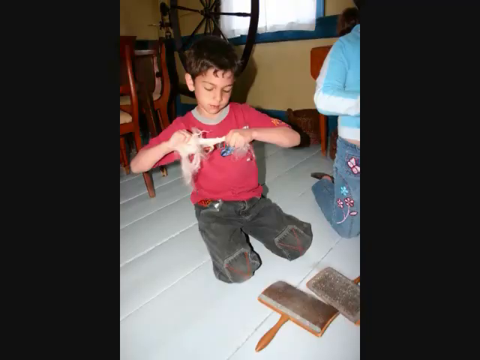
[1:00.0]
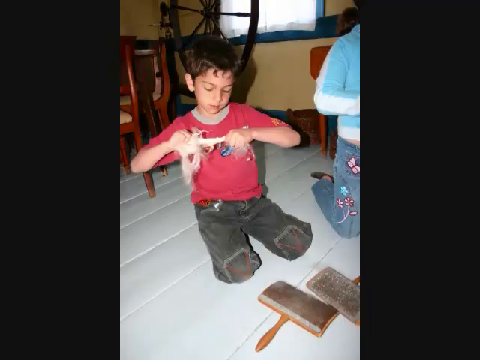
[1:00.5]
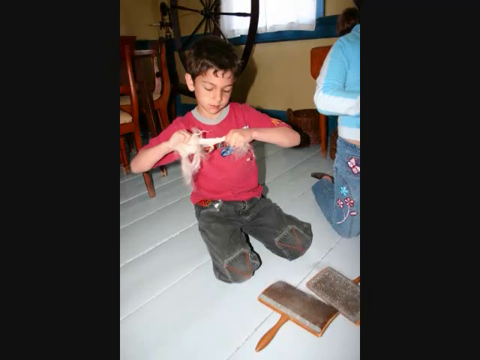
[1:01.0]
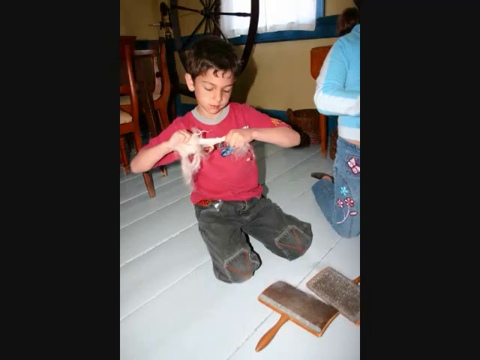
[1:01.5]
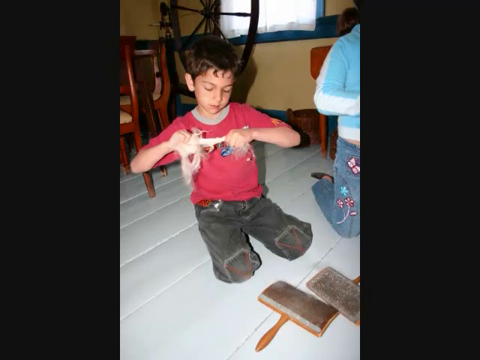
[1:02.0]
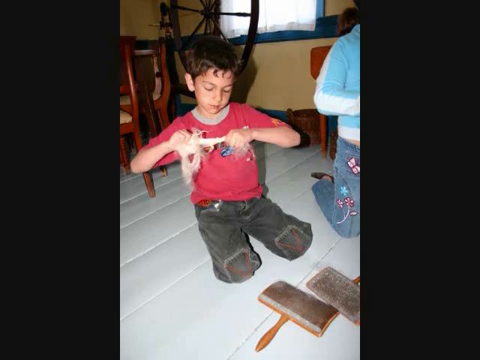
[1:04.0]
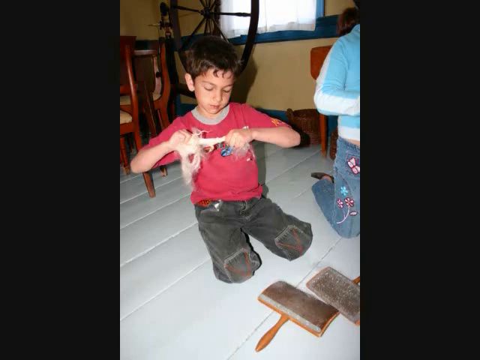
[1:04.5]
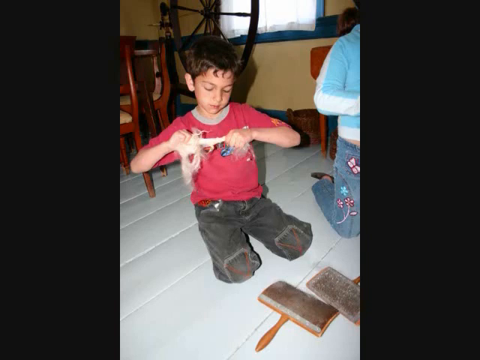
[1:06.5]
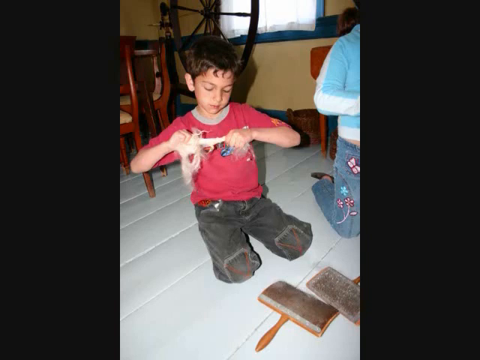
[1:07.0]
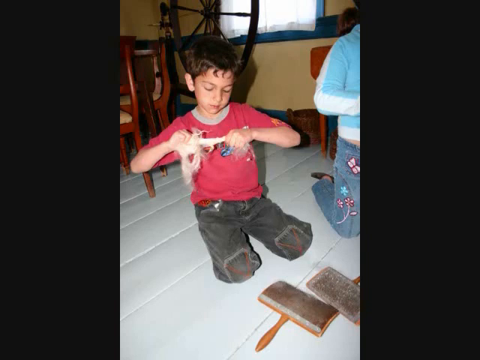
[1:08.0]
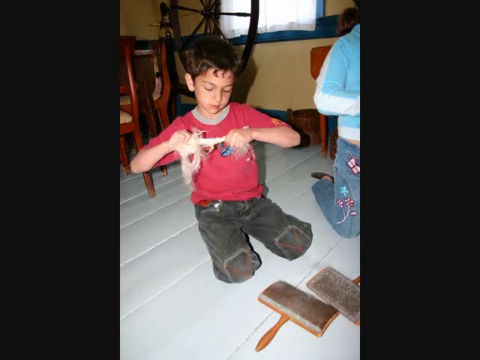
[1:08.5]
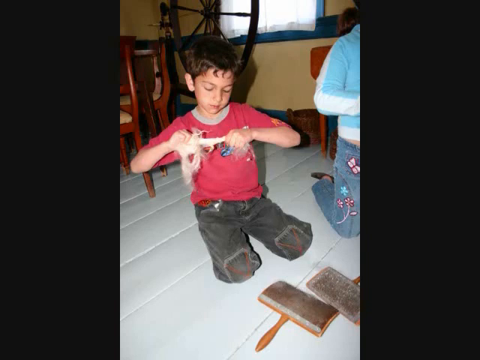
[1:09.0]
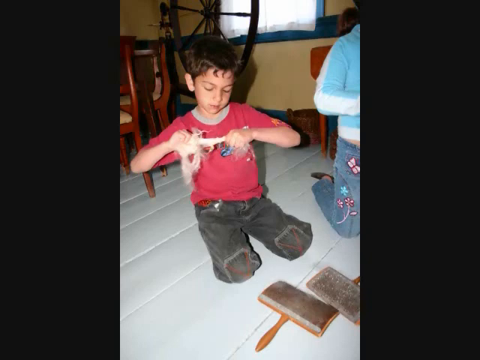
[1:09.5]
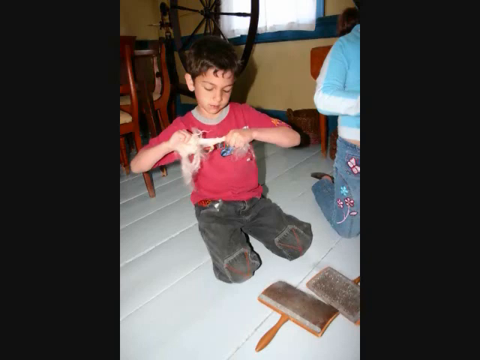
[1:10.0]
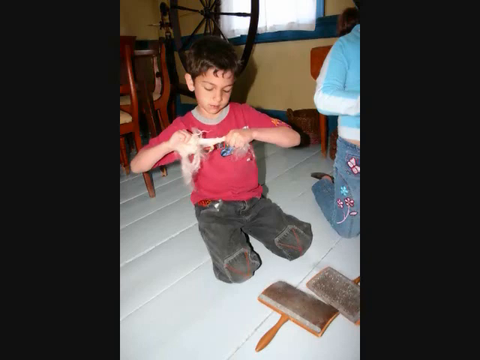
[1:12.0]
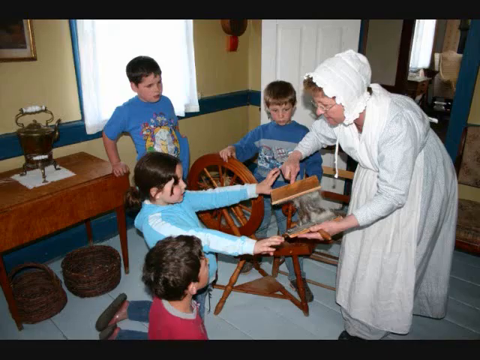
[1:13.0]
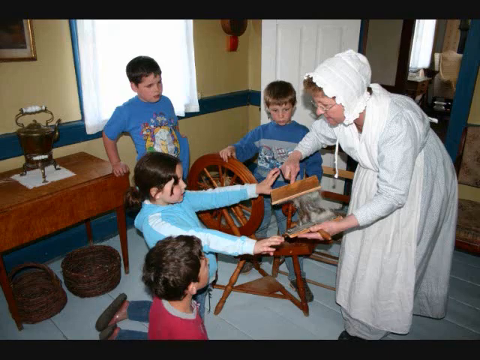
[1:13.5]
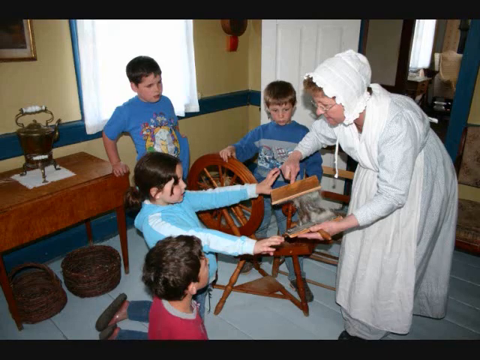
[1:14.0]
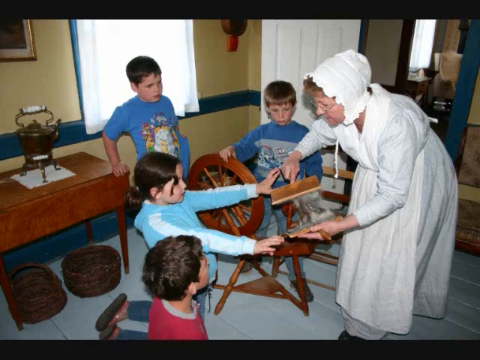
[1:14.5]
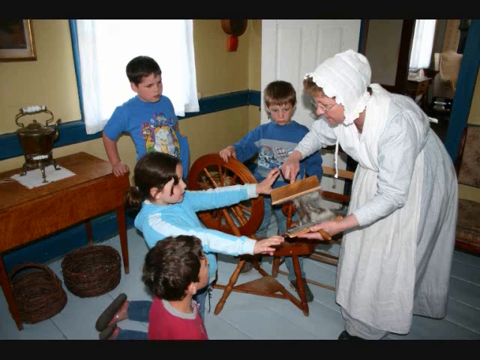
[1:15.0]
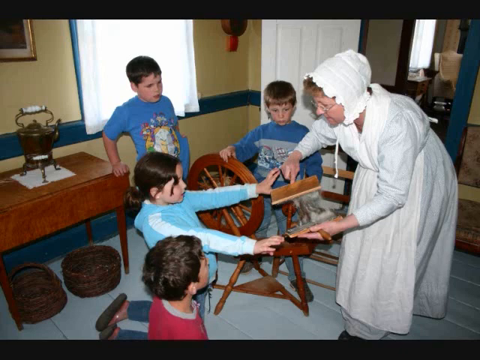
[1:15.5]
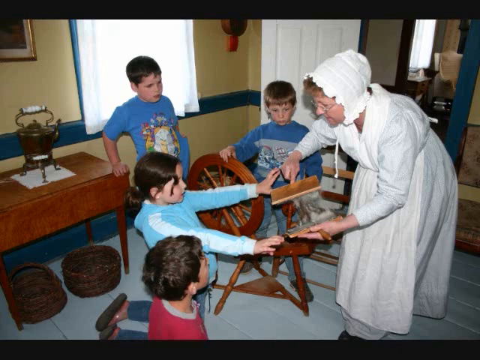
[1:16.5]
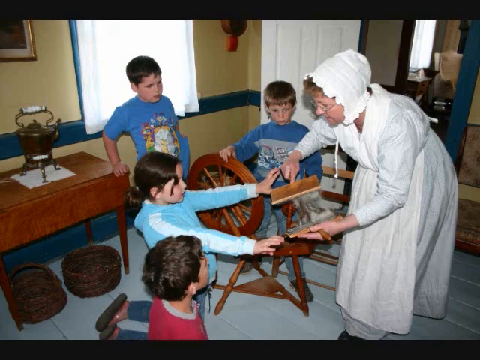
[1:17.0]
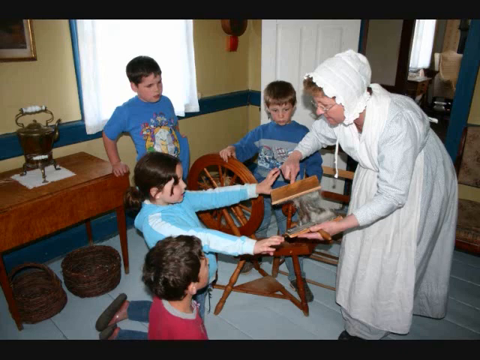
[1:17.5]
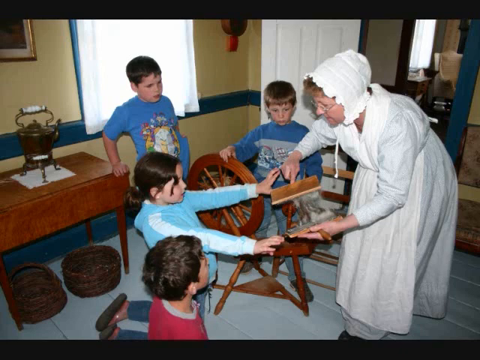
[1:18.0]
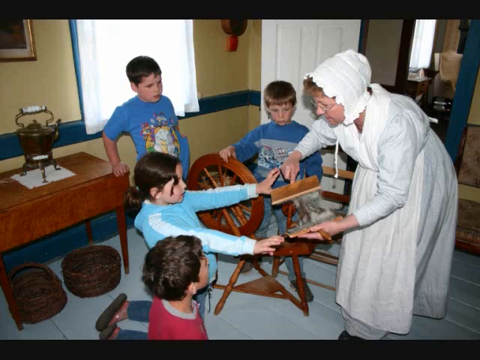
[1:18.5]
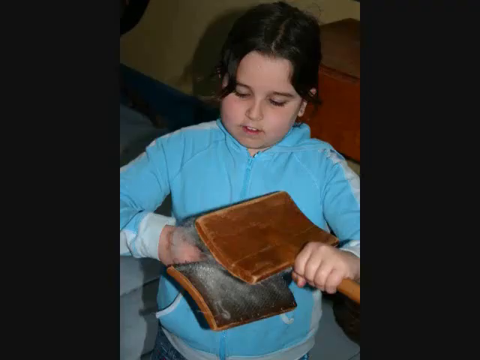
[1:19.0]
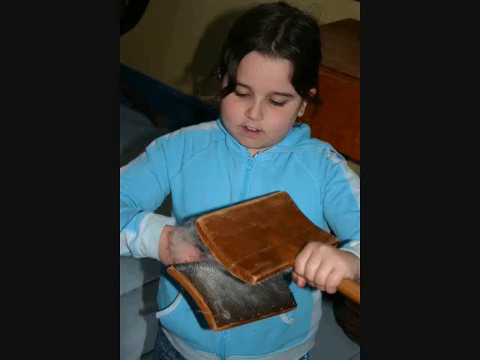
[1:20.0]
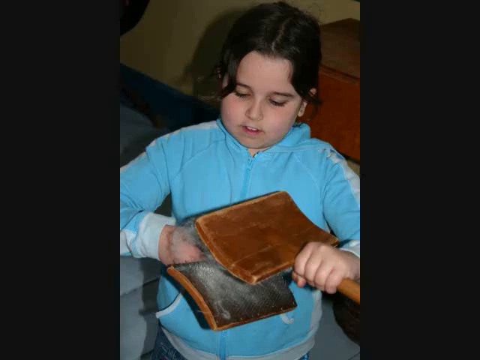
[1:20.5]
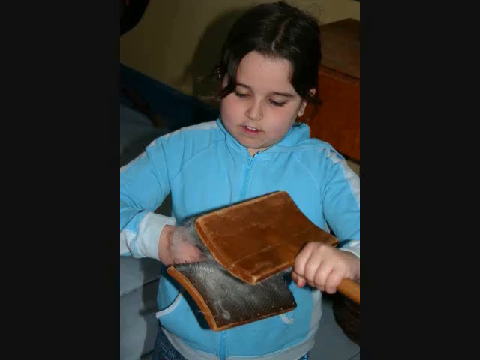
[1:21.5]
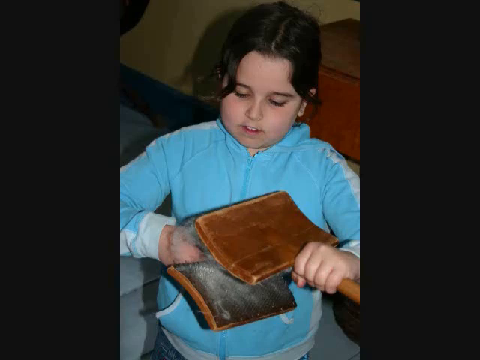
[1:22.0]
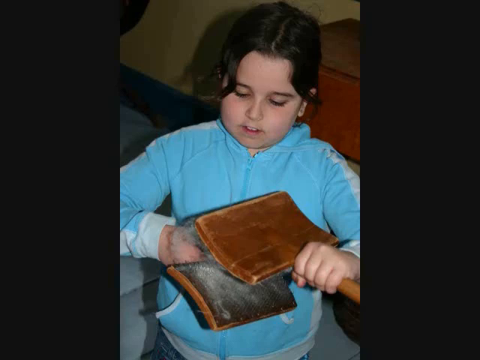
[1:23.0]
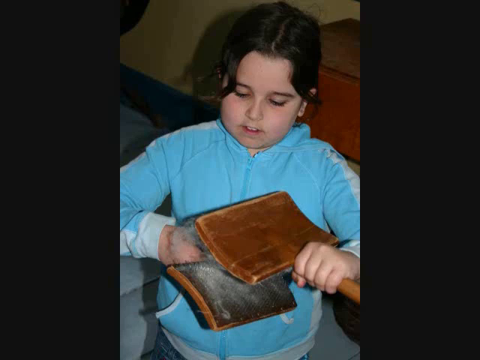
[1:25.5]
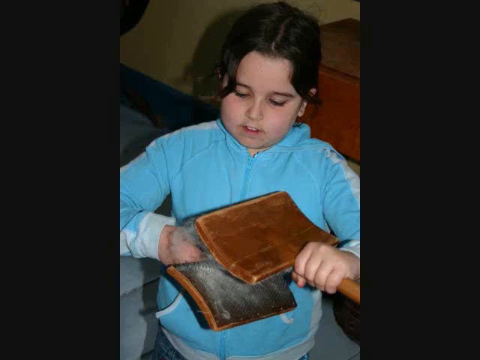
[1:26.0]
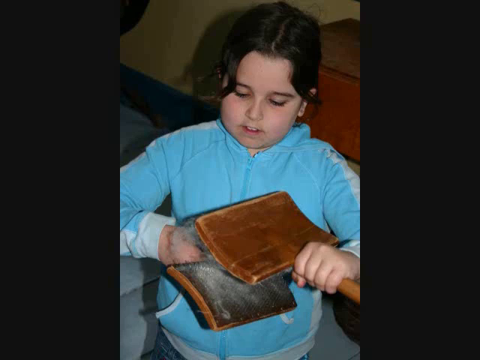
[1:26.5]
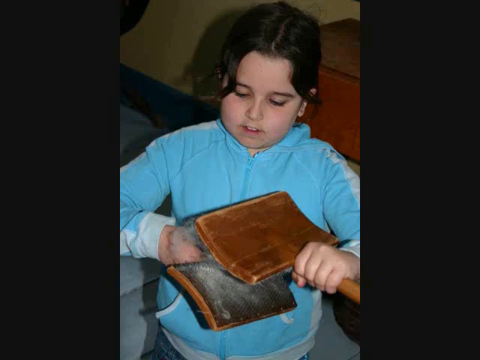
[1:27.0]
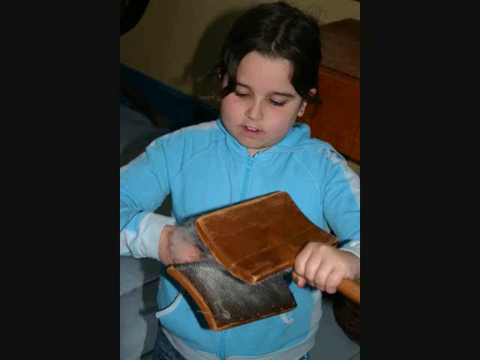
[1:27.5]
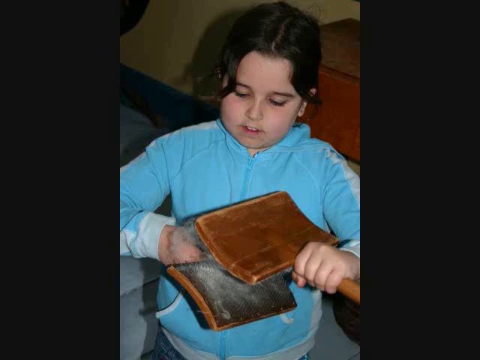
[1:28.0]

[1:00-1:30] A child, probably about seven or eight years old, with dark hair, a red shirt and darker pants with patches on both knees, appears to have some wool and is stretching it out. In front of him are what look to be two large, flat brushes, perhaps for brushing the coarse wool to make it less coarse. To his left, on the viewer's right, is a child who appears to be a little girl; her face is not visible, but she wears a light blue sweater with white on it and pants with butterflies and flowers.